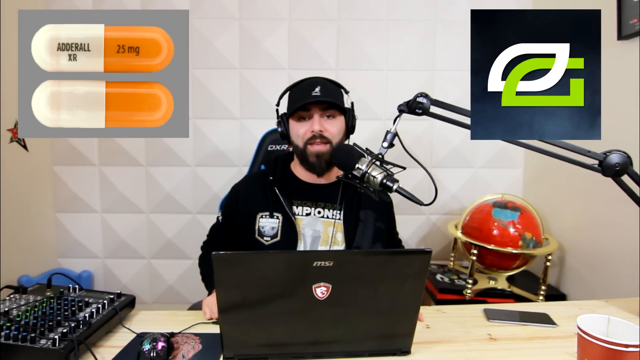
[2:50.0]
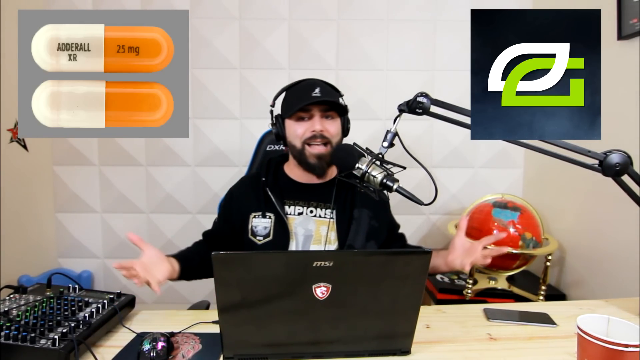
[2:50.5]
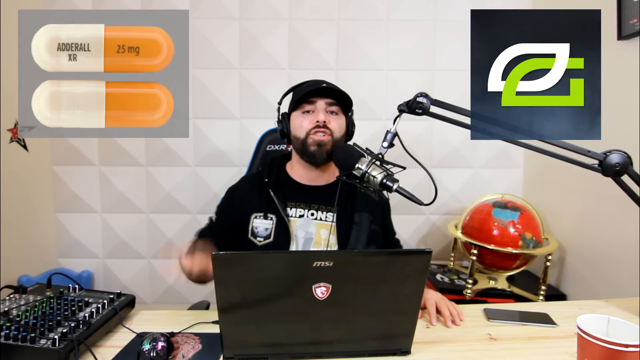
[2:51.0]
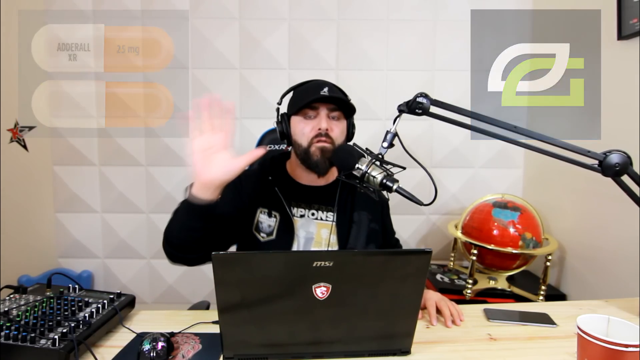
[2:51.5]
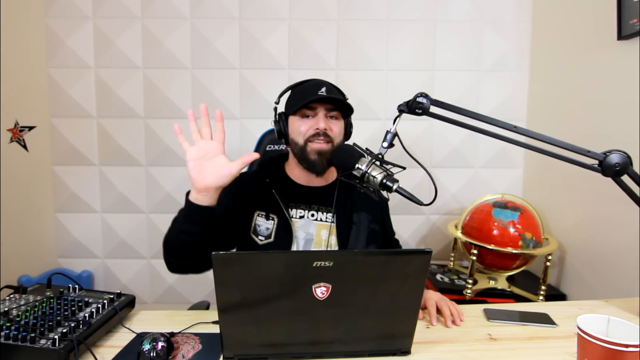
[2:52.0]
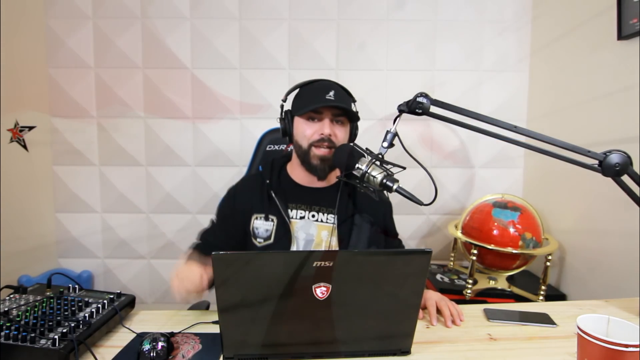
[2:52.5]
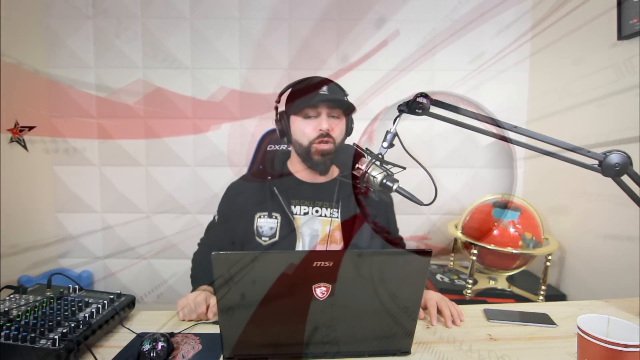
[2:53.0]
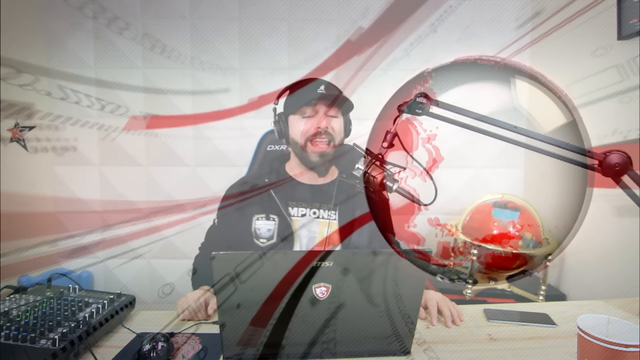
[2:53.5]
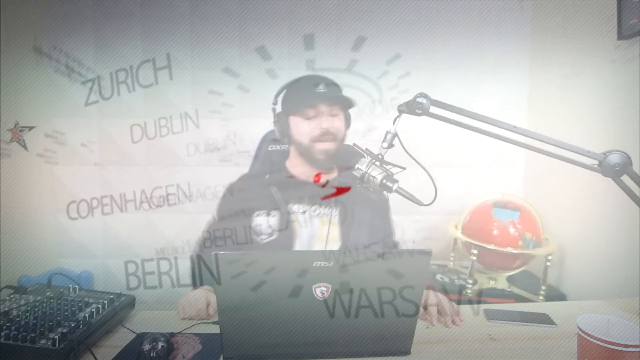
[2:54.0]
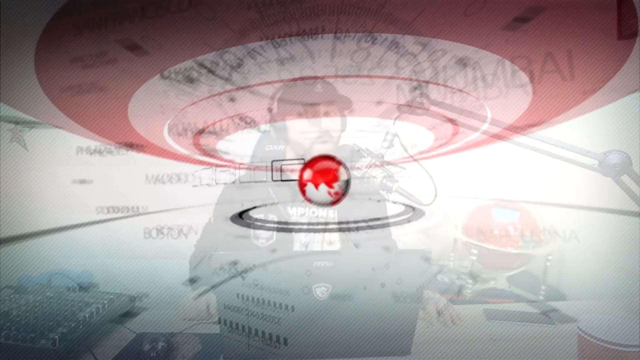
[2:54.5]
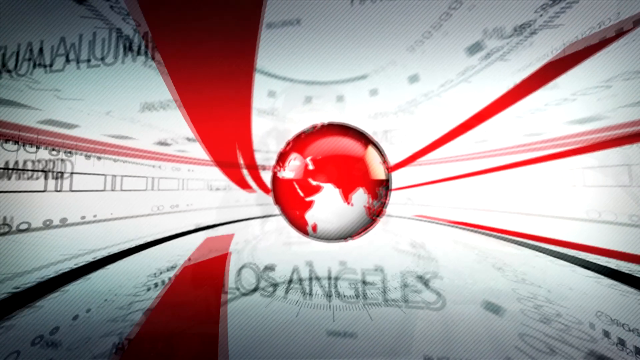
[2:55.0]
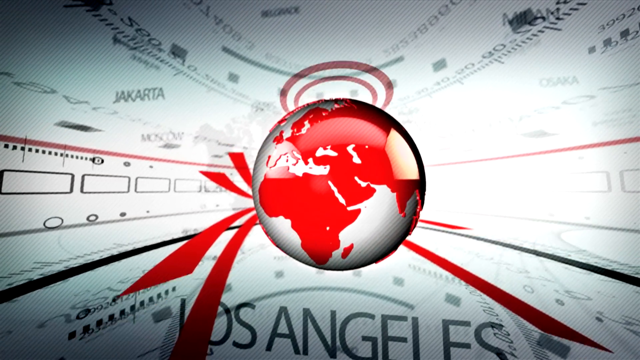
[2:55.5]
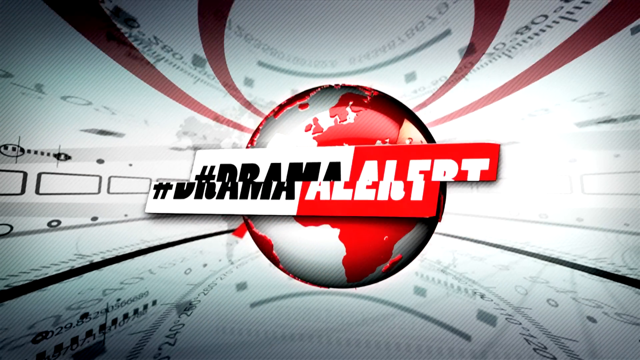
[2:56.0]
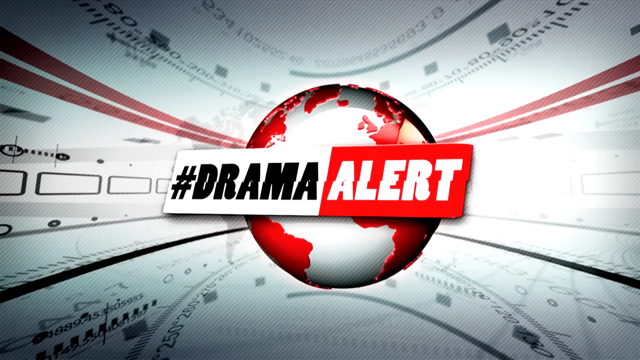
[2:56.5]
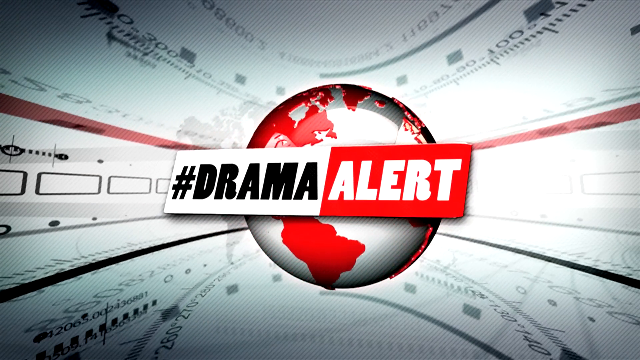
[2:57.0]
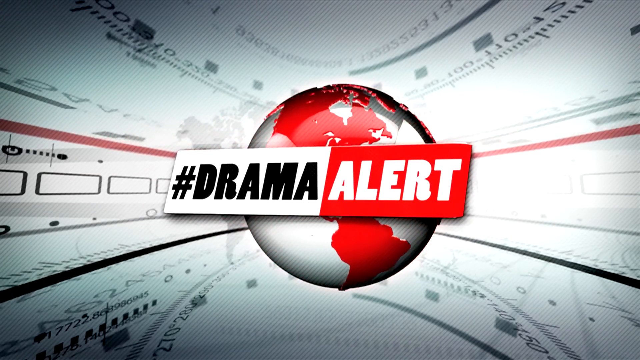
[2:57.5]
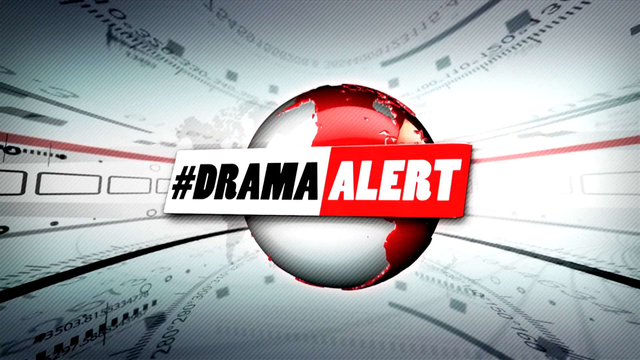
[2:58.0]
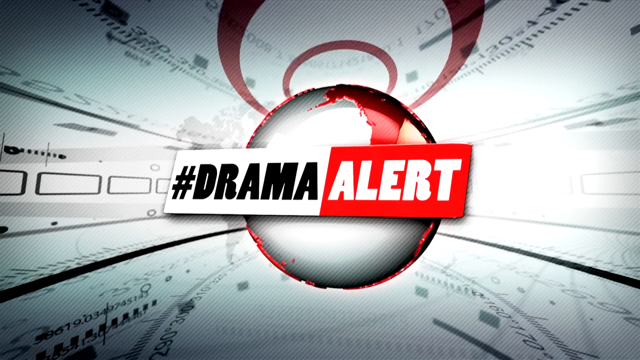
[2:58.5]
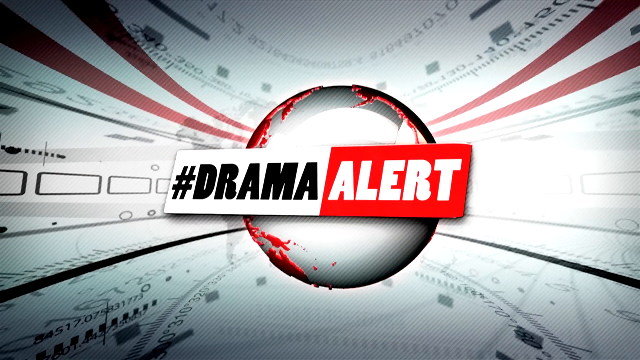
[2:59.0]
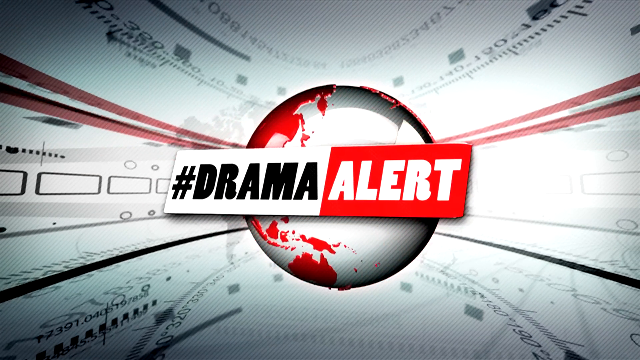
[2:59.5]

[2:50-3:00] The red and white globe from the beginning of the video appears. A box pops up over the globe that says "#drama alert"; the hashtag and "drama" are black, "alert" is white, and the box's background is white and red. It stays on screen for the final few seconds as the video ends. Some words are visible in the background, one of which is "Los Angeles"; nothing else can be made out.